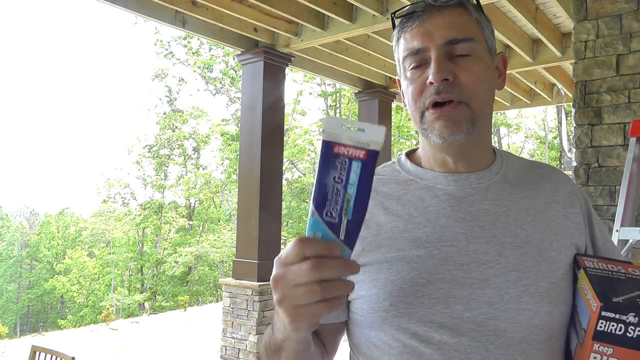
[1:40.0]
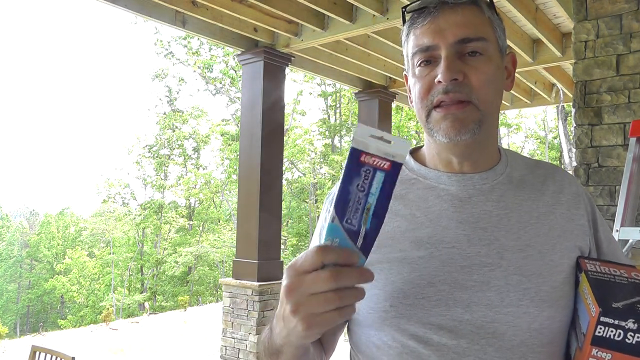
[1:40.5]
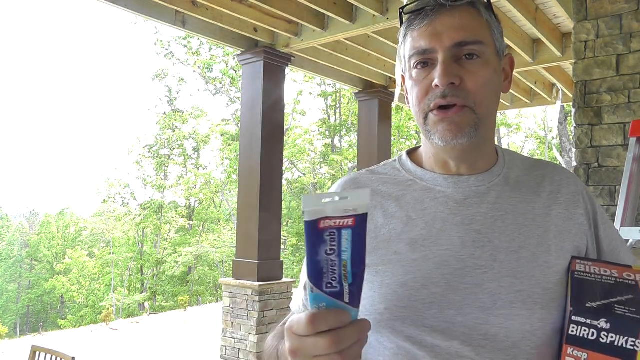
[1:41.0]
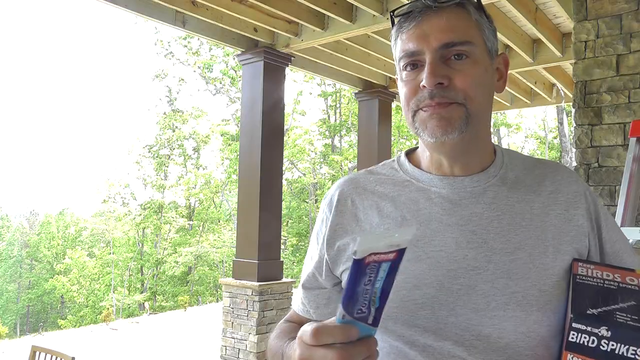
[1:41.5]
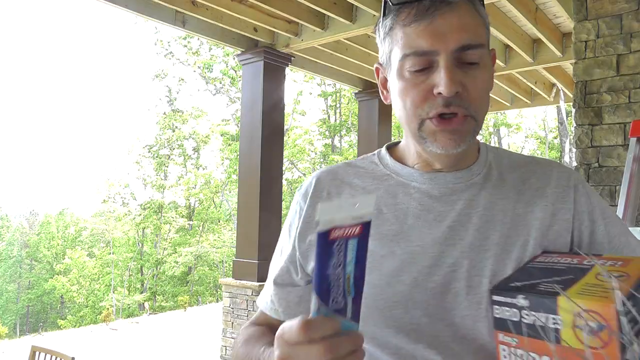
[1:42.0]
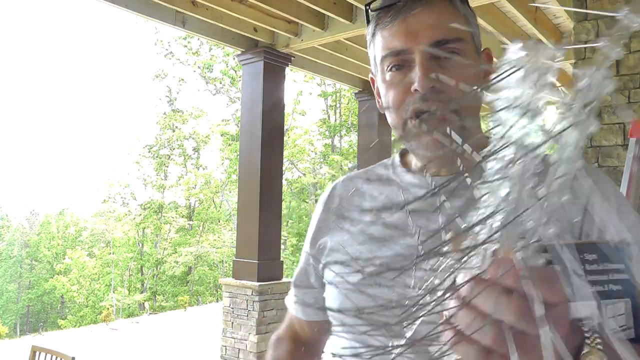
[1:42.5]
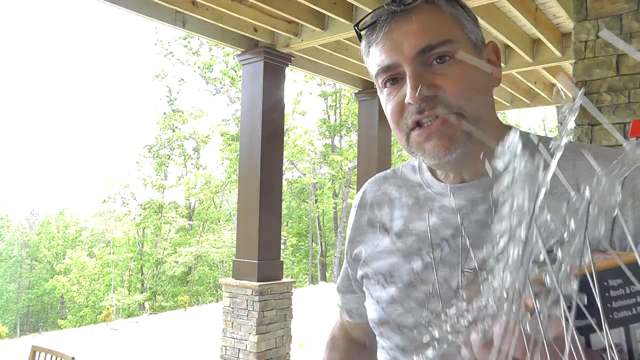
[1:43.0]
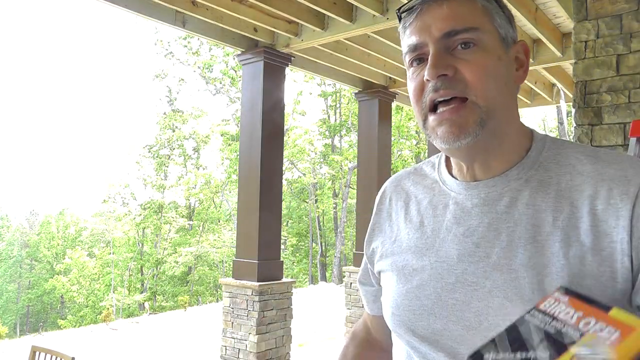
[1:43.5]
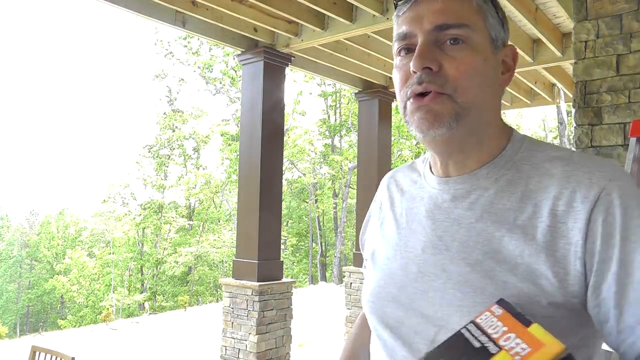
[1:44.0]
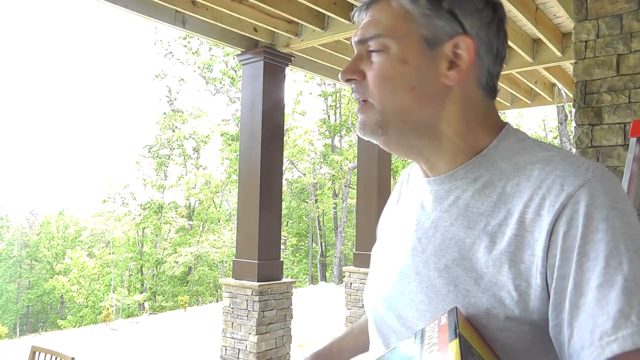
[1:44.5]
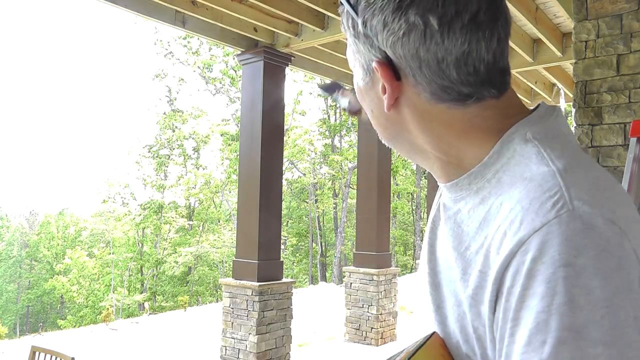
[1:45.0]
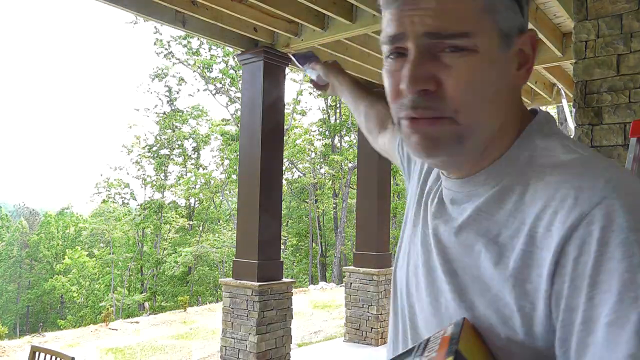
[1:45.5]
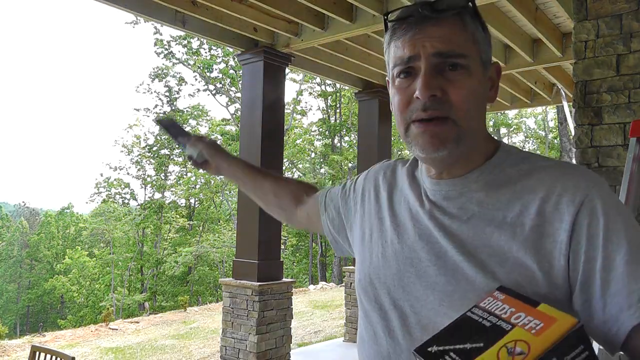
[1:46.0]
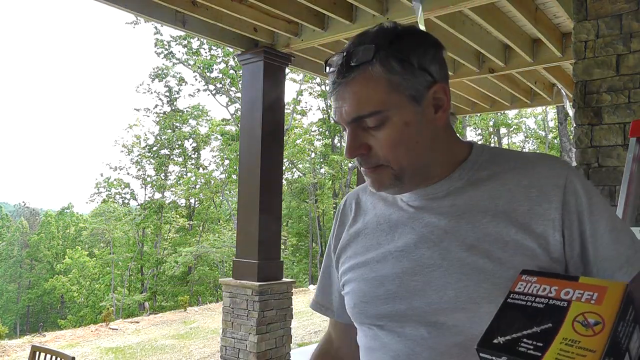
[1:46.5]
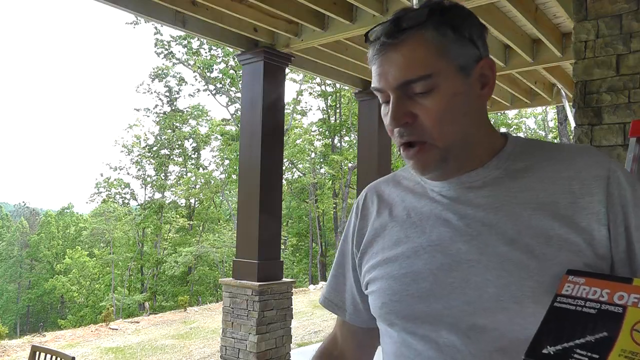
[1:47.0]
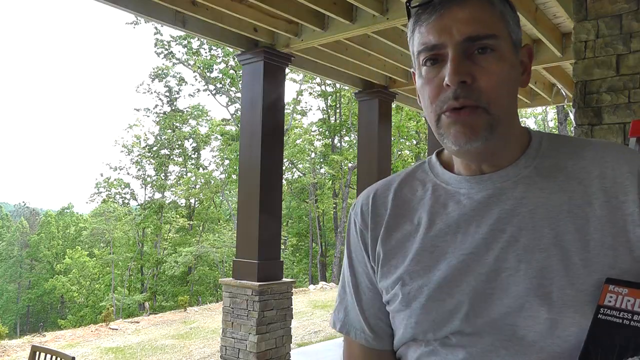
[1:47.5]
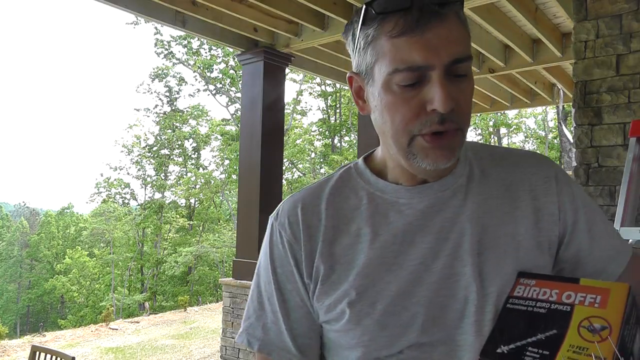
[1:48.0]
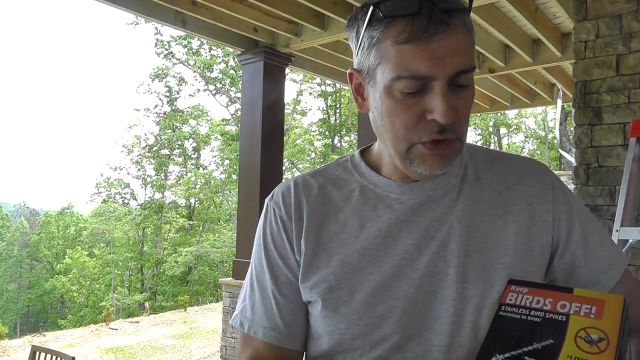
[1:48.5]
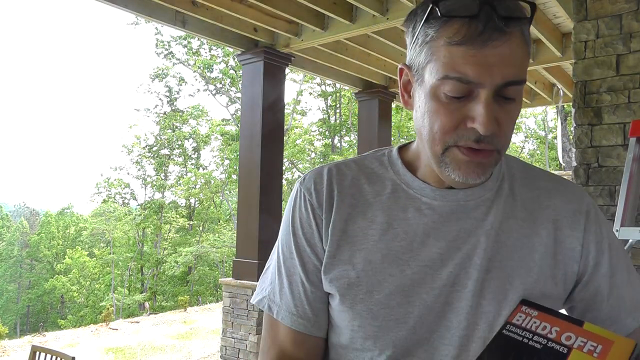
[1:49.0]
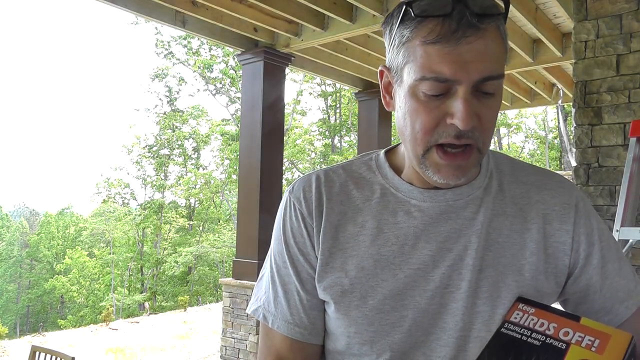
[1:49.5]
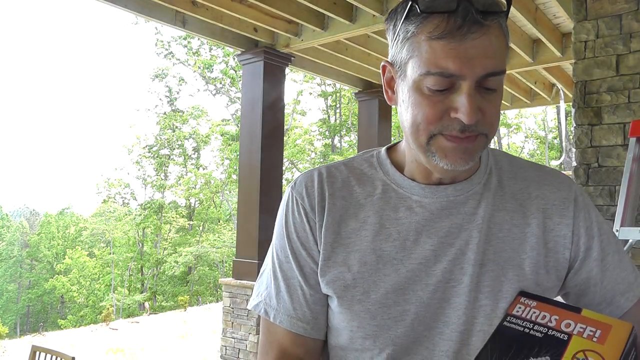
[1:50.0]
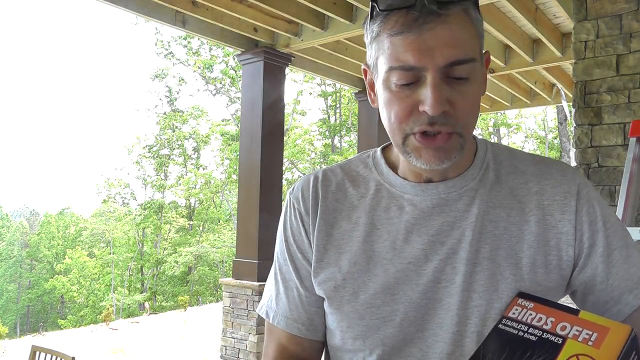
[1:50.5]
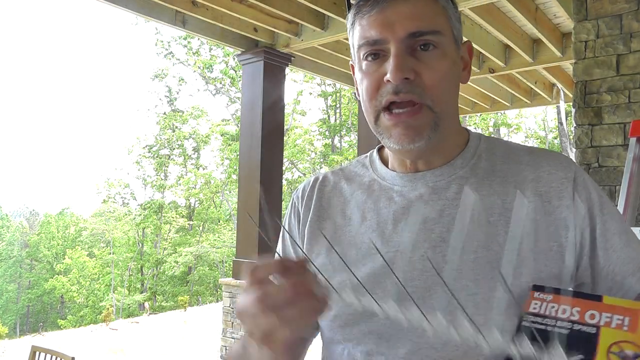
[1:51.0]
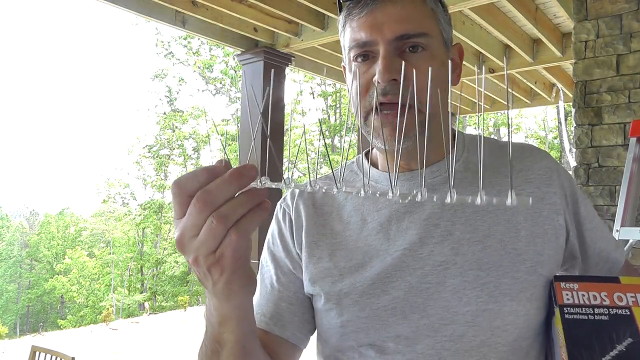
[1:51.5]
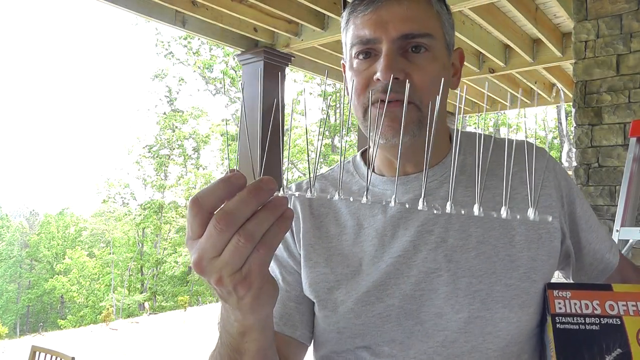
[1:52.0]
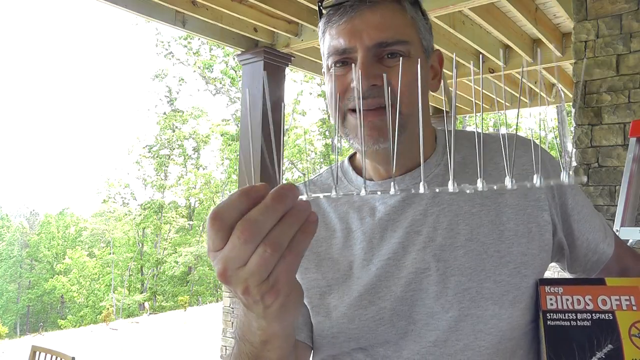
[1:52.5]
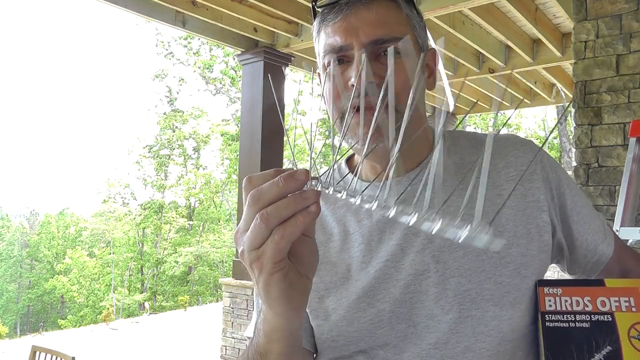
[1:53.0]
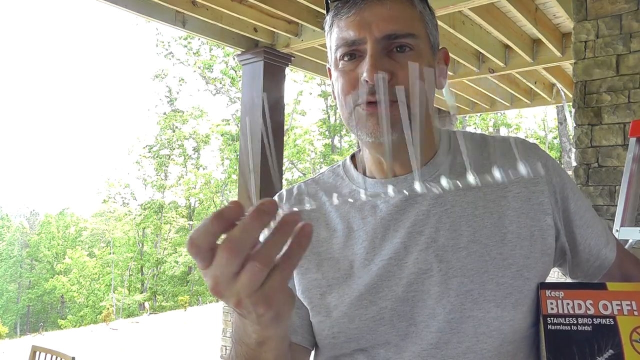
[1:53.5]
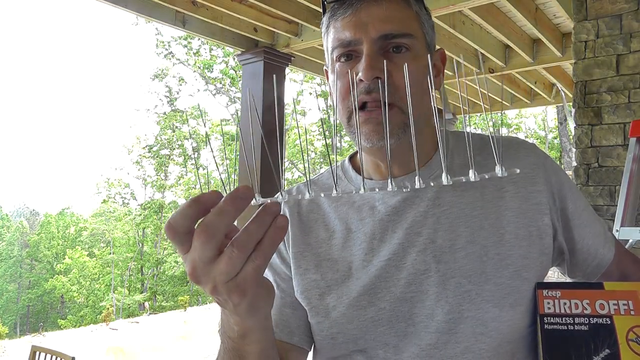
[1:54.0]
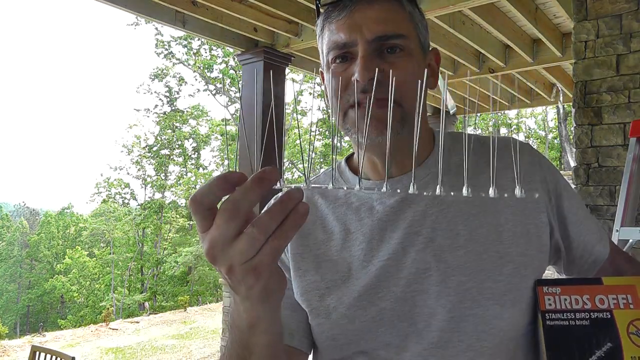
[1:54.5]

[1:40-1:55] The man holds a tube of adhesive in his right hand and a box of plastic and metal spiky things in his other hand, lifting them up to point at where he is going to install them on the house. Green woods are in the background, along with an aluminum ladder with a red paint tray. The house appears to be new construction, with a light tan and gray stone wall, and wooden columns painted dark brown behind him. He wears a white t-shirt and has gray hair with glasses perched on top of his head. Pieces of Mylar film flow in the wind behind him.